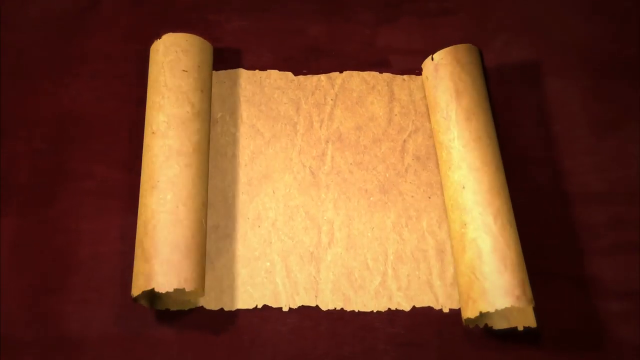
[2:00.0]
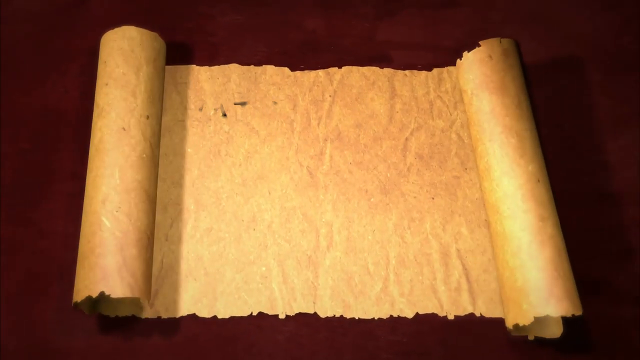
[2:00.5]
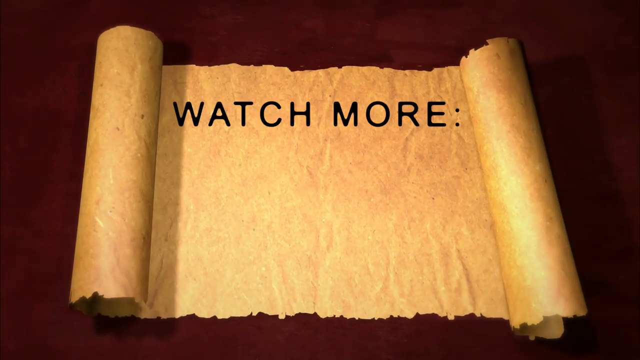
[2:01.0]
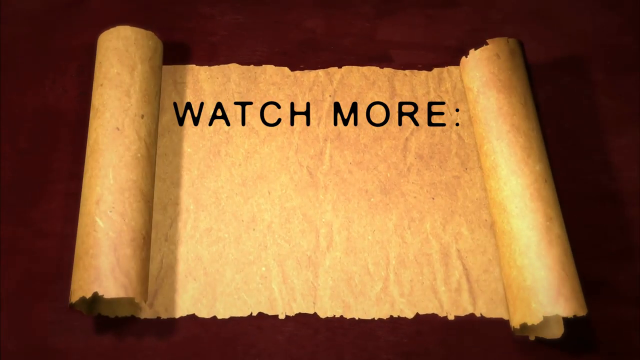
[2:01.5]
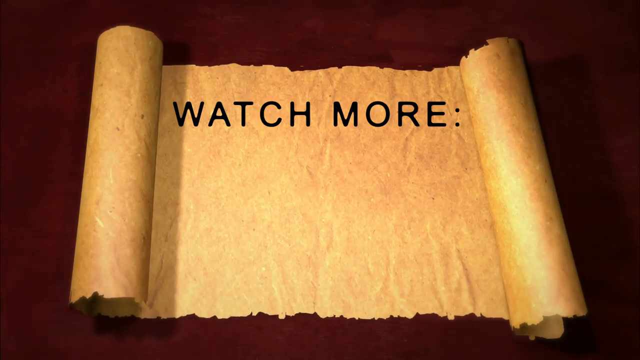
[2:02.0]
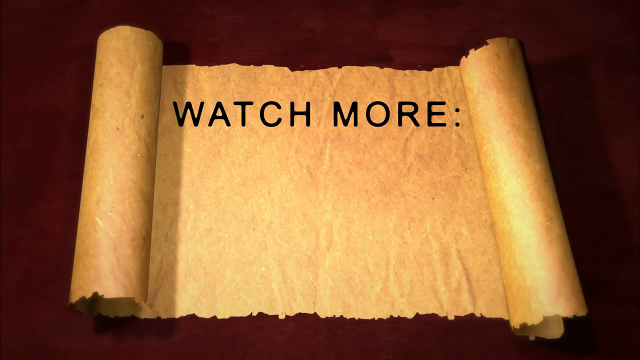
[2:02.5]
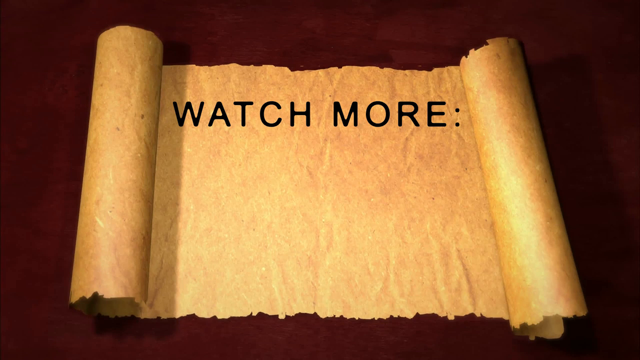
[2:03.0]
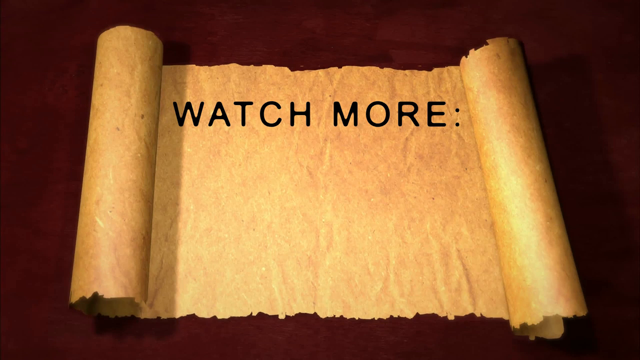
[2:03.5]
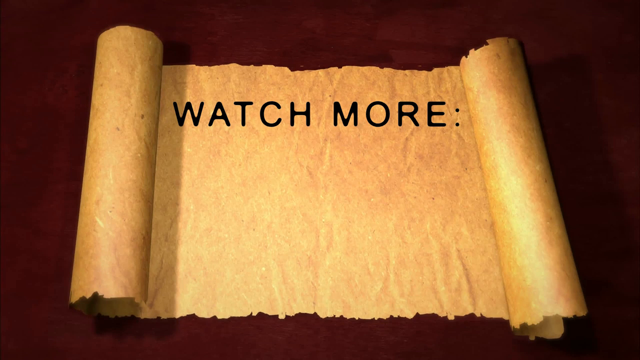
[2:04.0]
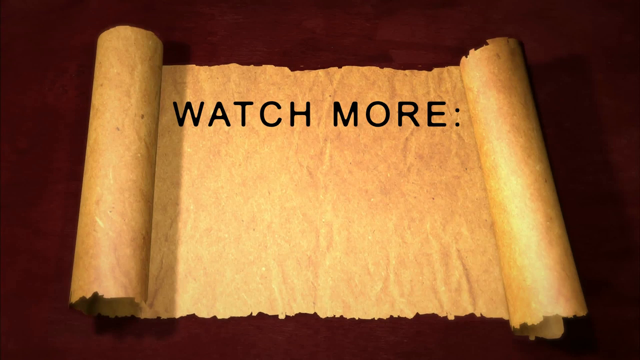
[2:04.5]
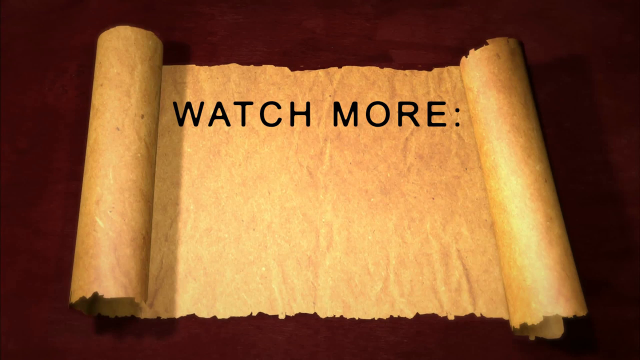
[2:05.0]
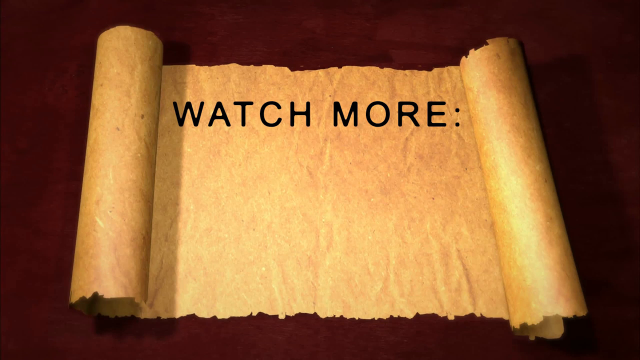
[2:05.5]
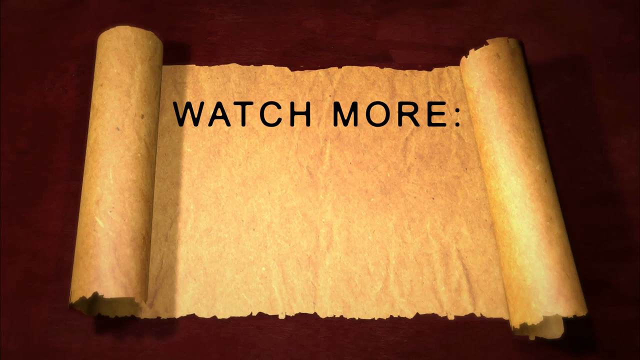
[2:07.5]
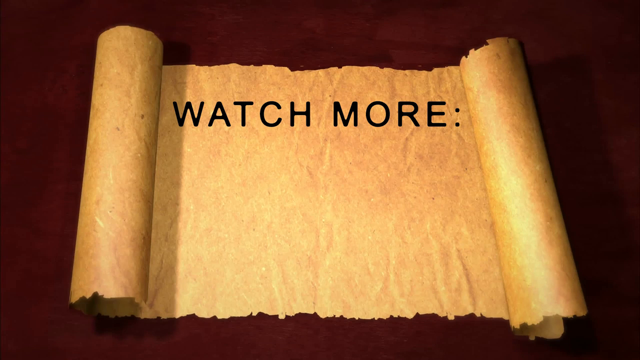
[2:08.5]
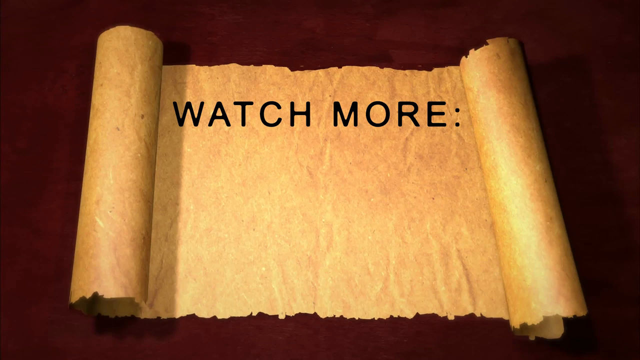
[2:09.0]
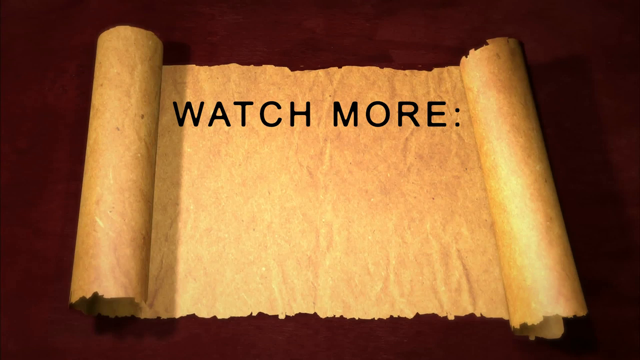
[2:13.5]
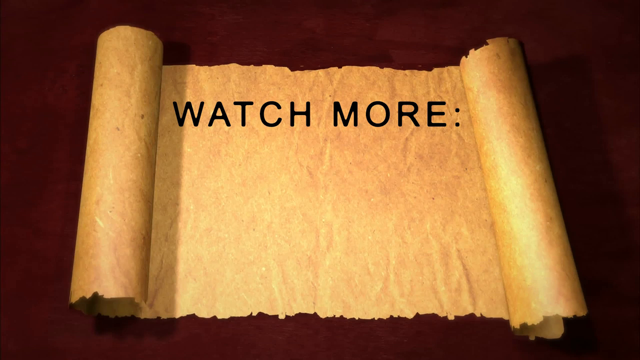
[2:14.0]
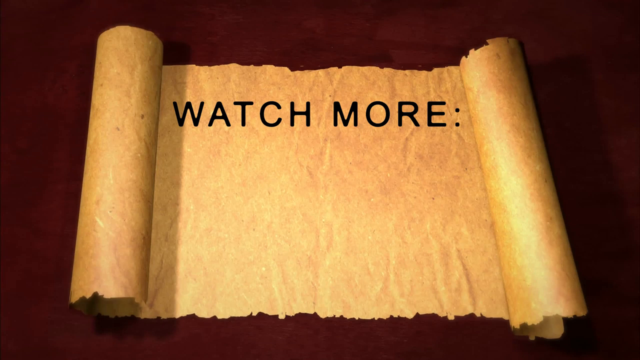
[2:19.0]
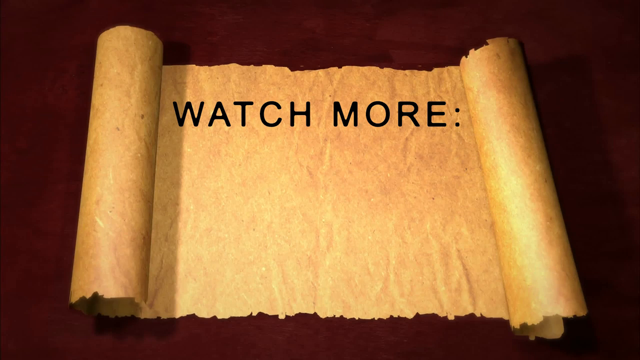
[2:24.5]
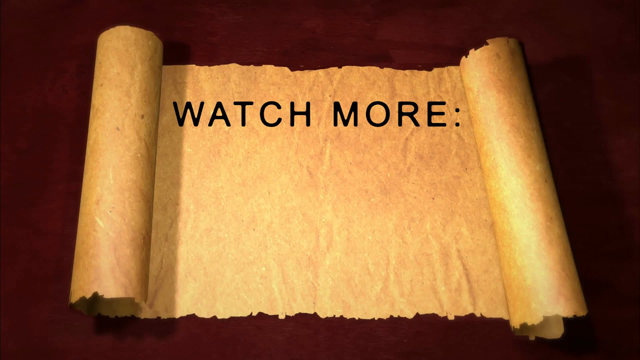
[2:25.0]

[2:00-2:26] A CGI scroll unravels itself on a table. The scroll is a lighter brown, like an older piece of parchment, while the table behind it is very dark and possibly mahogany, though hard to tell. The main focus is the scroll. Text in black, all caps, reads "watch more" followed by a colon; it appears to be not on the scroll but just text on the dark. Below it appears to be where a link to a YouTube video would be.